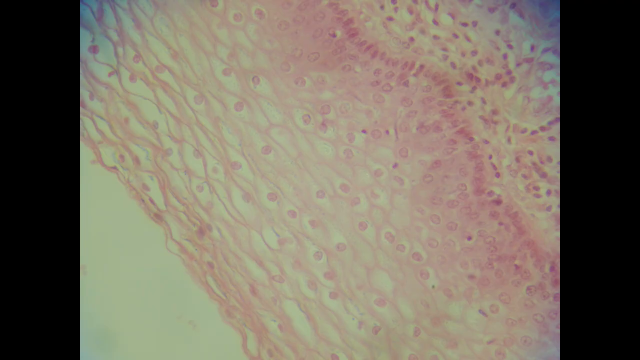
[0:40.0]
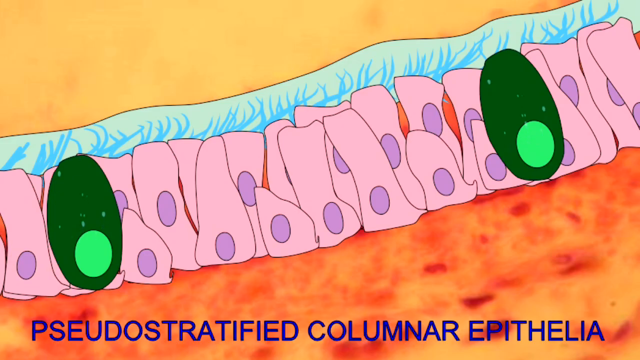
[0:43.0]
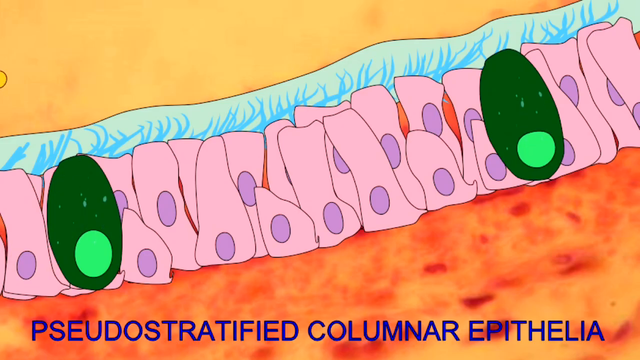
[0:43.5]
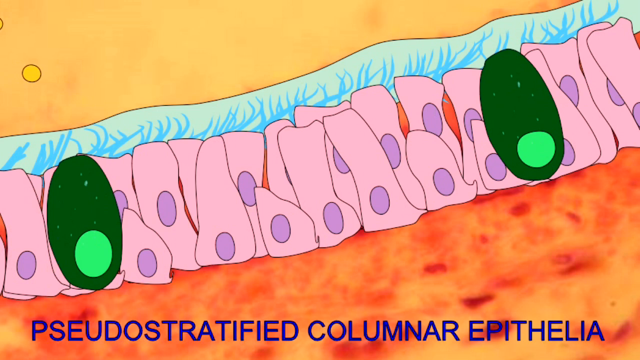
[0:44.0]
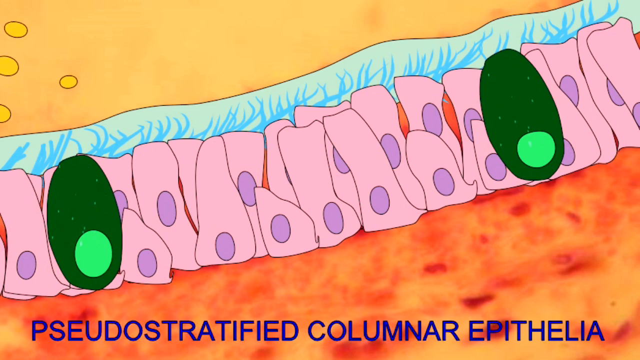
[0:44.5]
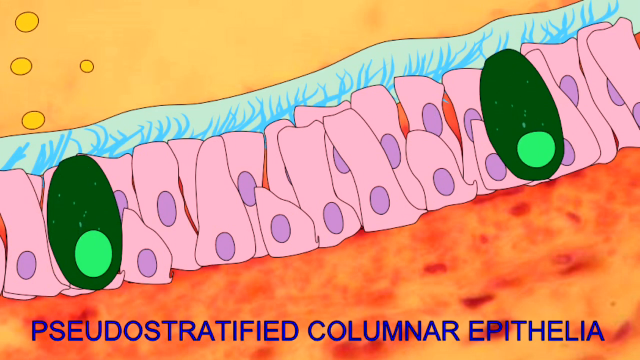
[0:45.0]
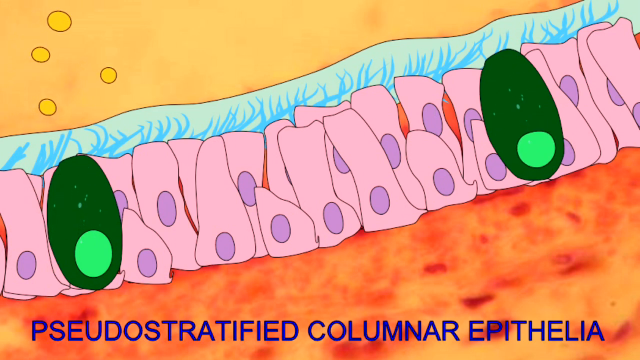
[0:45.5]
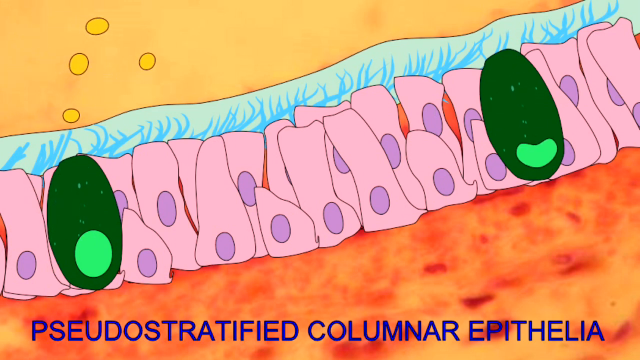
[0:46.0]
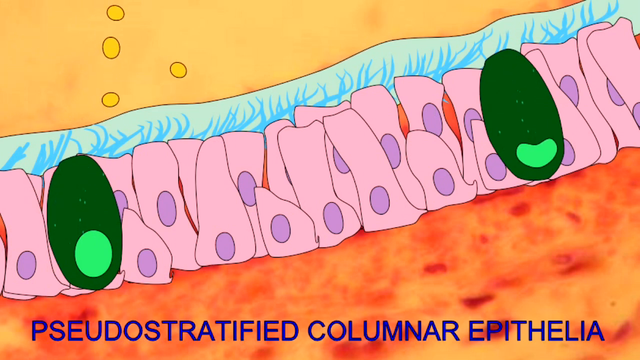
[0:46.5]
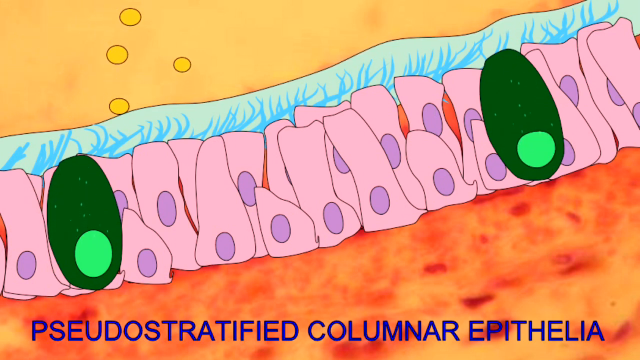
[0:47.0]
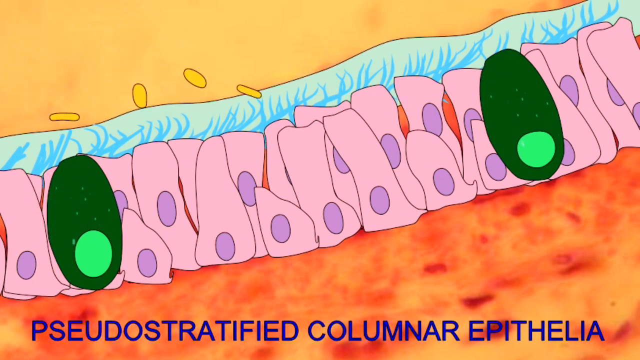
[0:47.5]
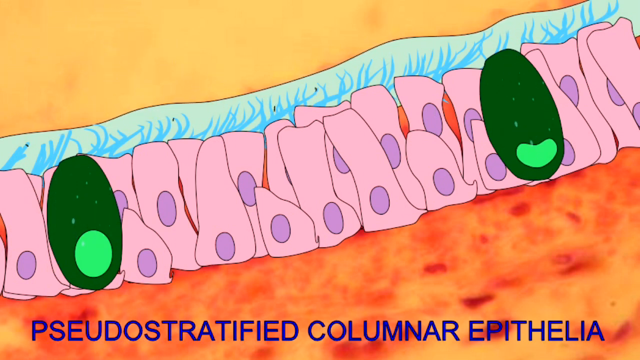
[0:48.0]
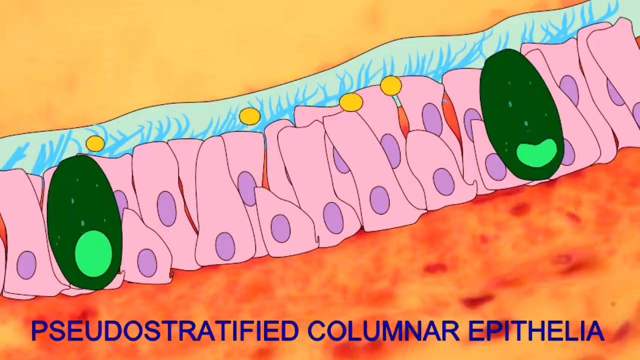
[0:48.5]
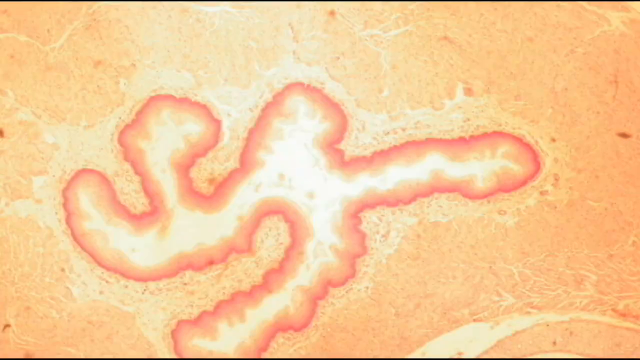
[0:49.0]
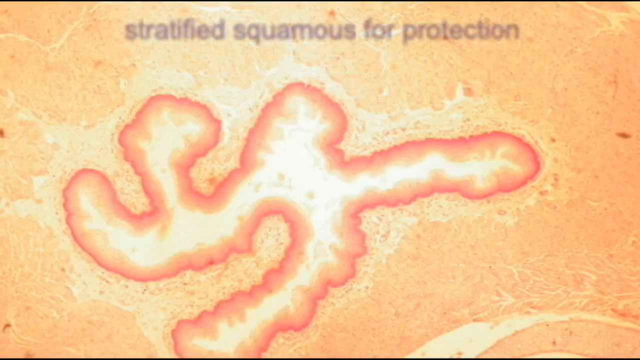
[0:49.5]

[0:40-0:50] A group of cells appears, possibly under a microscope. They almost look like sperm, kind of gravitating toward each other, and there are many black dots on the right side of the image; it looks like either an x-ray or a microscope view. The image then changes to a computer animation showing cell walls colored in pink, each with a little oval in its center. There is orange matter at the bottom and yellowish matter at the top, and large green, almost avocado-looking cells on the left and right sides with yellow circles inside them. Yellow circles then appear from the left side of the screen, looking as if they are swimming through some kind of substance, and move toward the avocado-looking object on the right side. The image then changes to an almost T-shaped cellular organic object. At the top it says "stratified squamous for protection", and two arrows point to different parts of the squamous area.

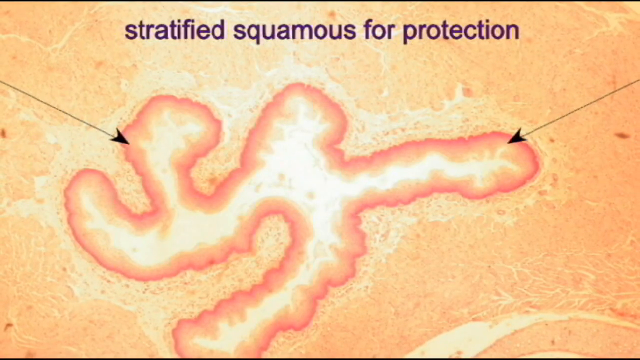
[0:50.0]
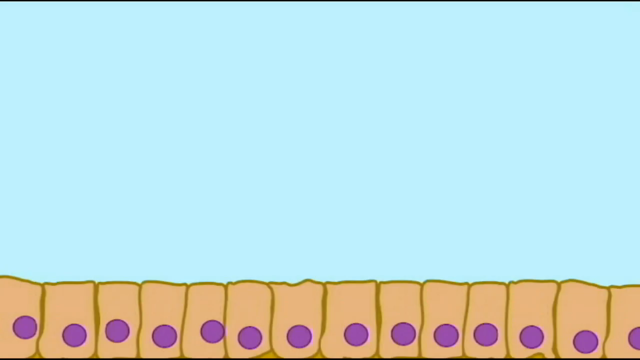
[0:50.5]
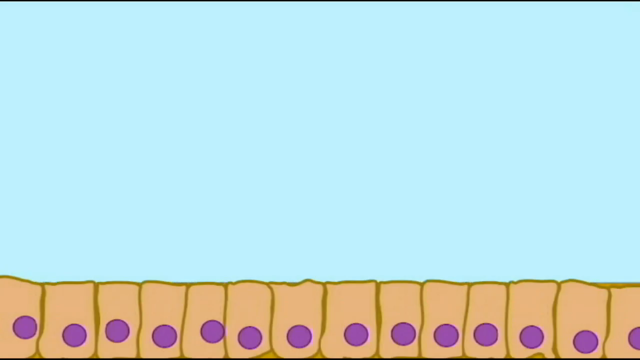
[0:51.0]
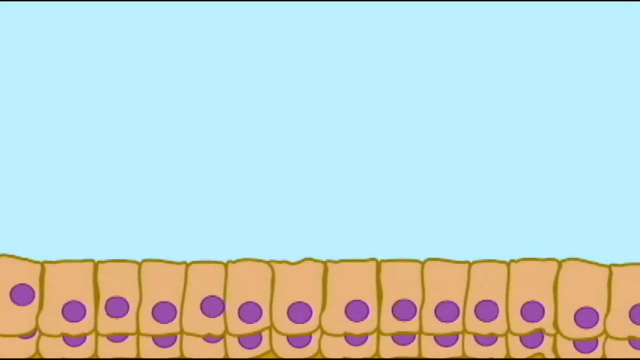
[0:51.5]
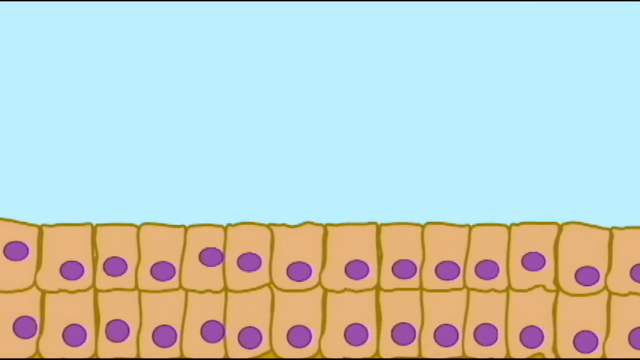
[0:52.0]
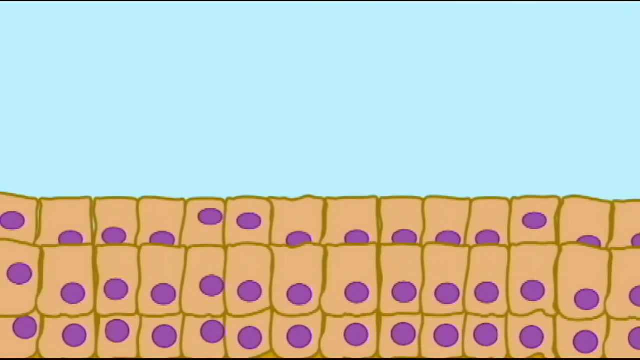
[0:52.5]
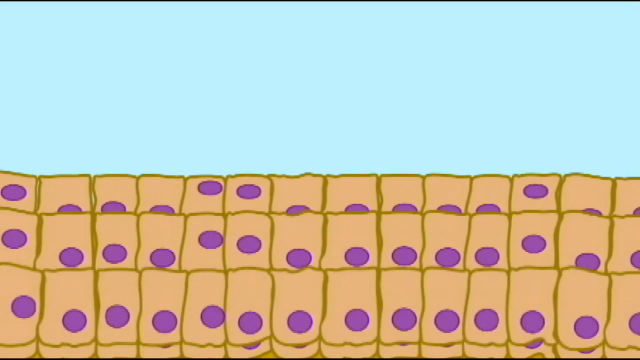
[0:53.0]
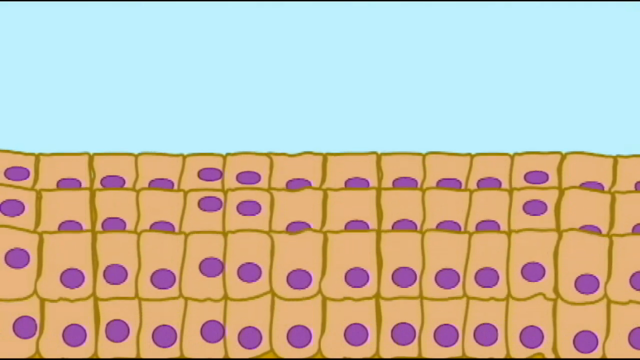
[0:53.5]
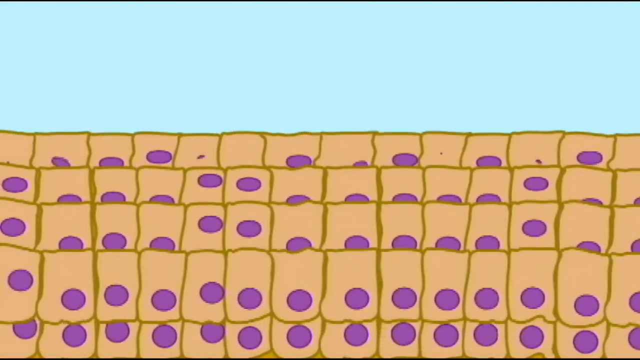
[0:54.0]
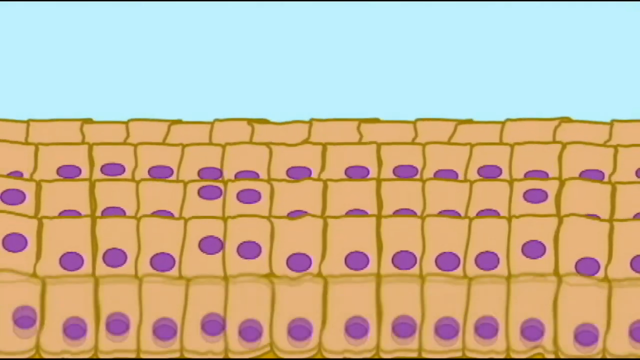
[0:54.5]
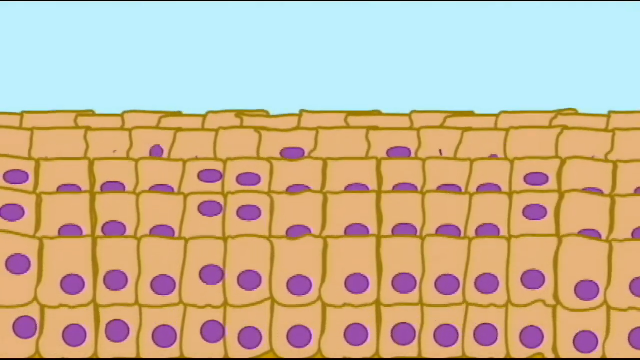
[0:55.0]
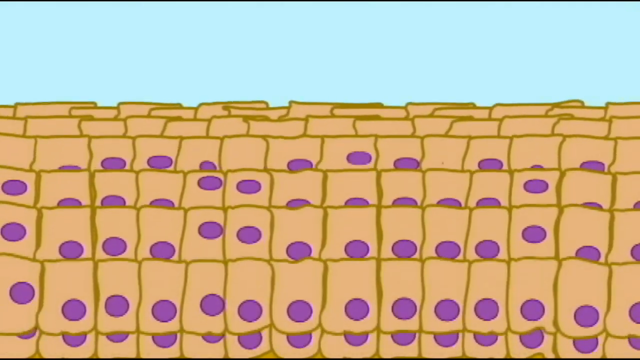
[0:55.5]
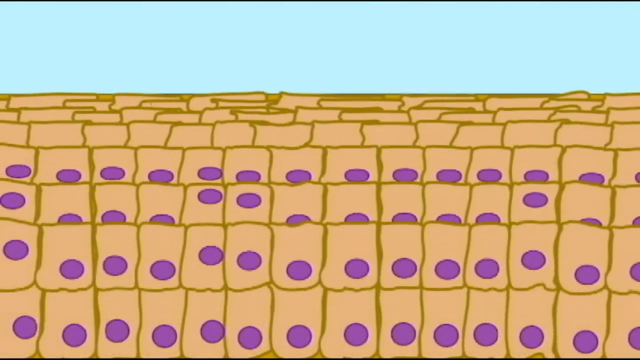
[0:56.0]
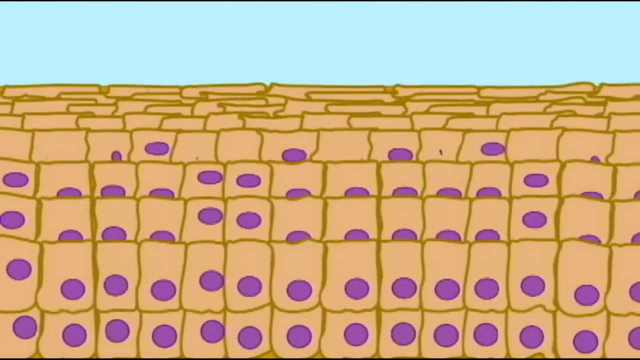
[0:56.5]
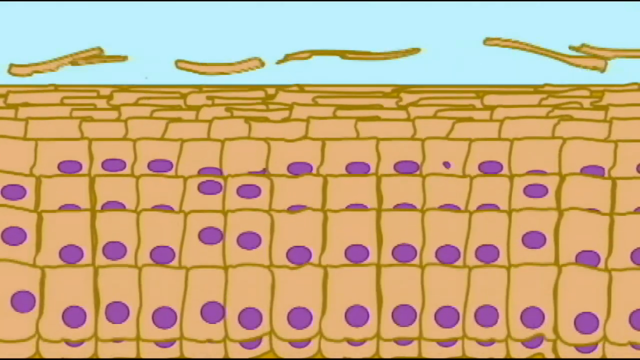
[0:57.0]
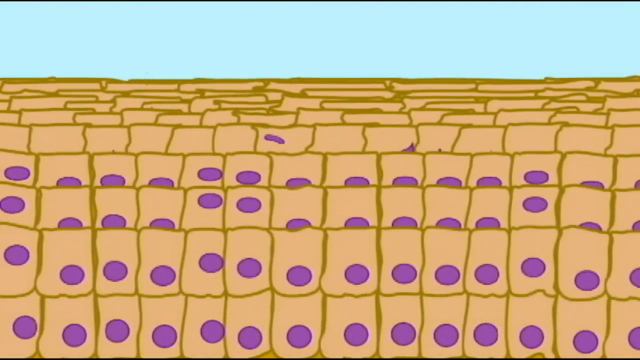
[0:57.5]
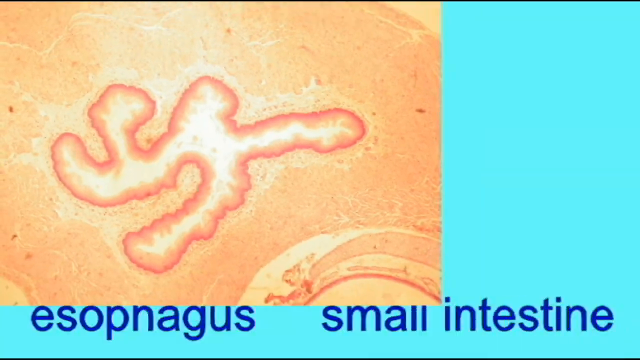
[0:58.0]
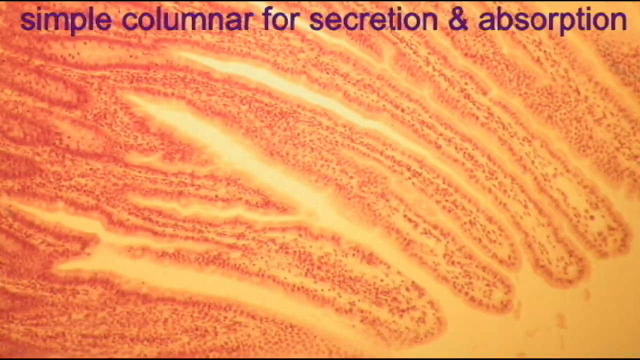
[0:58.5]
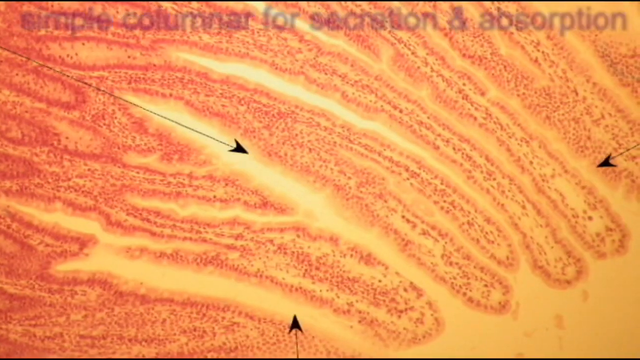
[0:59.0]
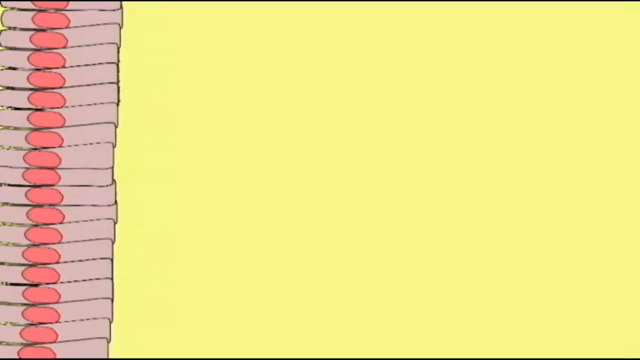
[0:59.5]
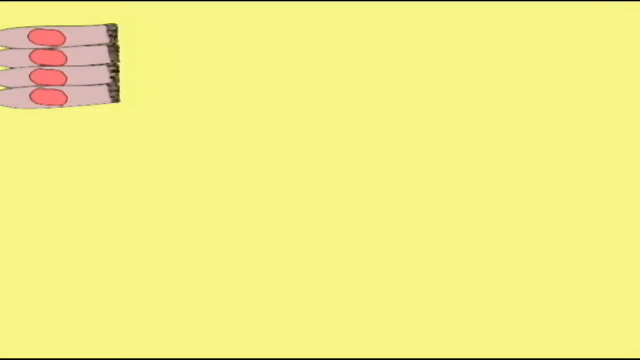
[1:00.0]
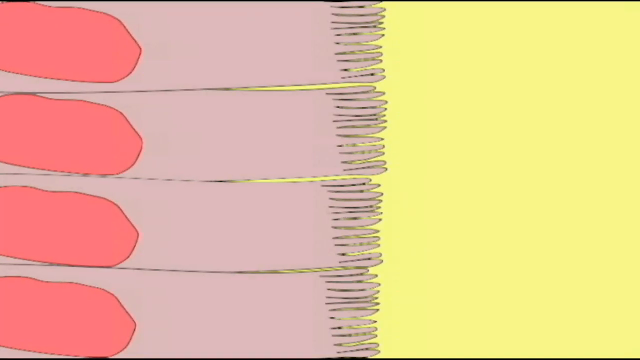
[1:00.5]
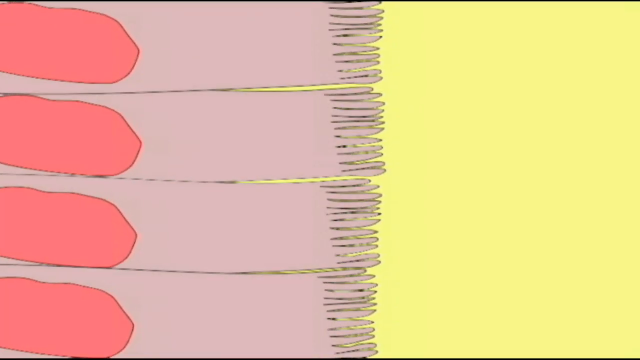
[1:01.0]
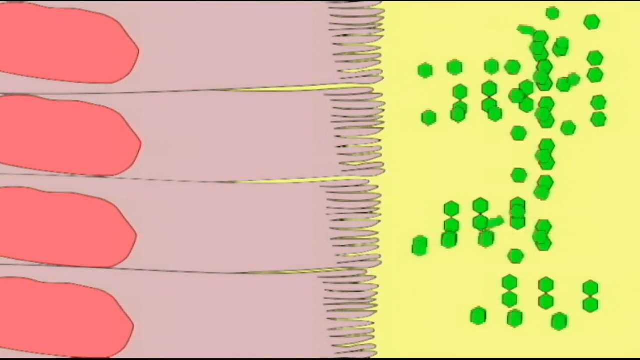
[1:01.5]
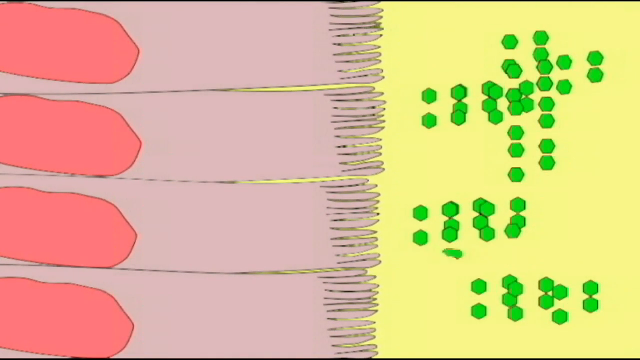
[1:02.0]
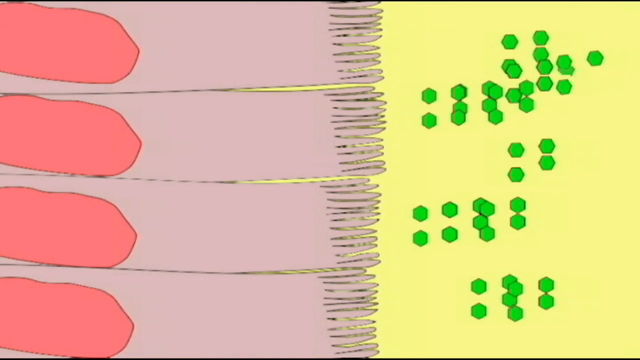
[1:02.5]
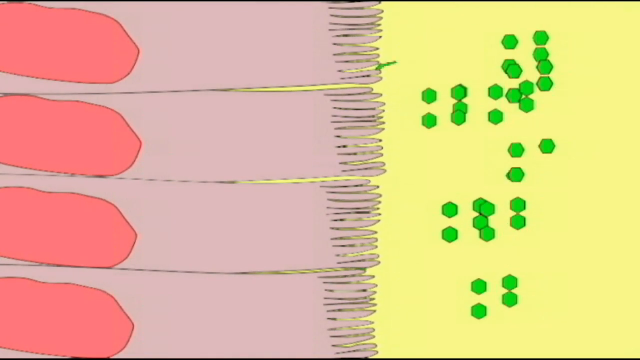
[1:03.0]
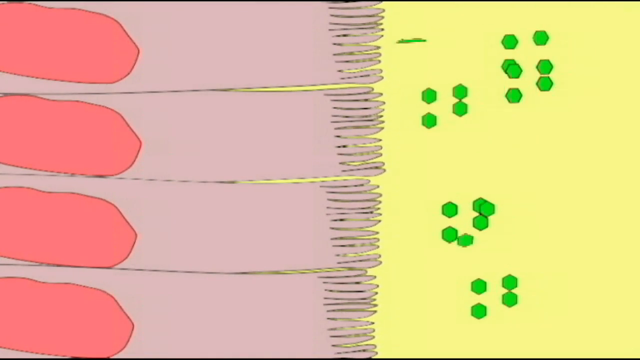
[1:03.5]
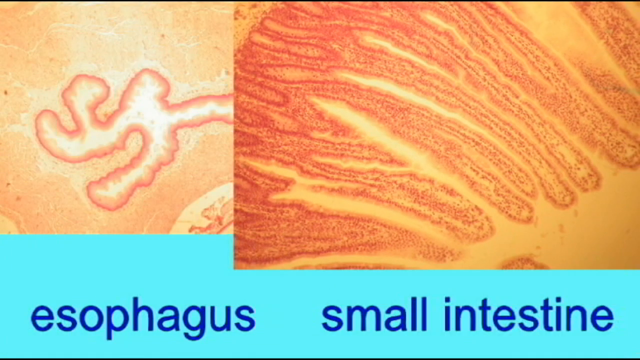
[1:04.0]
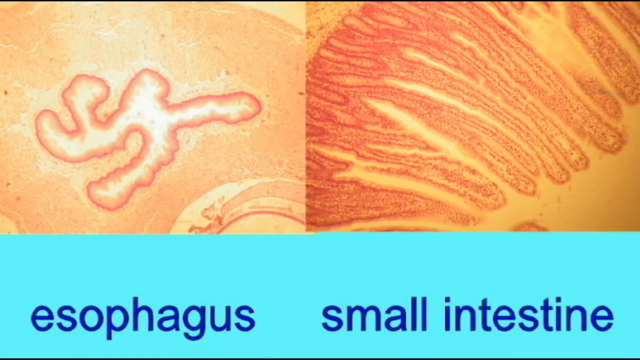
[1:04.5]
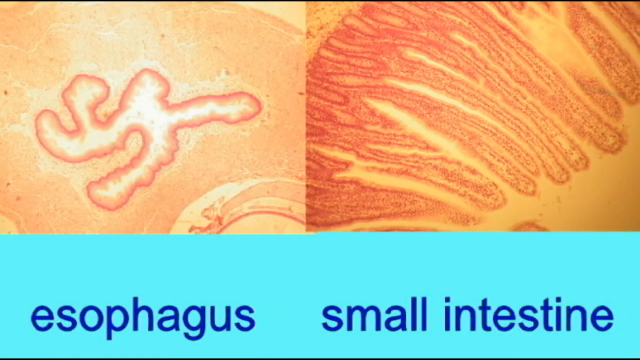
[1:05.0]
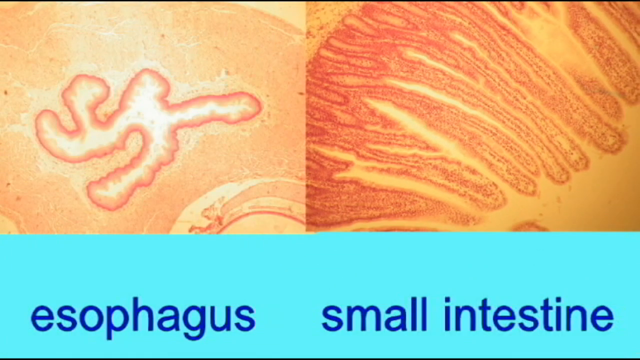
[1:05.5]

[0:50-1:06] A T-looking cellular organic object is shown, with text at the very top reading "Stratified squamous for protection" and an arrow pointing to its left side and another to its right side. It has a very bizarre shape: a T, but mutated, almost a T with extra arms. The video changes to a computer graphic of cell walls appearing from the bottom of the screen against a blue backdrop, each with a small circular purple object in its center. More and more walls pop up until they almost fill the entire image. The scene then changes to a close-up view of an image seen earlier in the video, with text at the very top reading "Simple columnar for secretion and absorption". It shows many roundish, rectangular-looking stripes that look like the arms of an insect, with many different colors and lots of red dots and spots. Arrows appear on the screen pointing to different parts of the object. The scene then changes to a computer graphic of more cell walls, each with a pink oval in the center. The cell walls come toward the camera, and their ends almost look like shredded pieces of paper. Green octagonal-type objects appear on the right side and merge with the cell walls. Finally the image changes to the T-shaped object from earlier alongside the rectangular-circular objects just seen, with text at the bottom reading "Esophagus and small intestine".